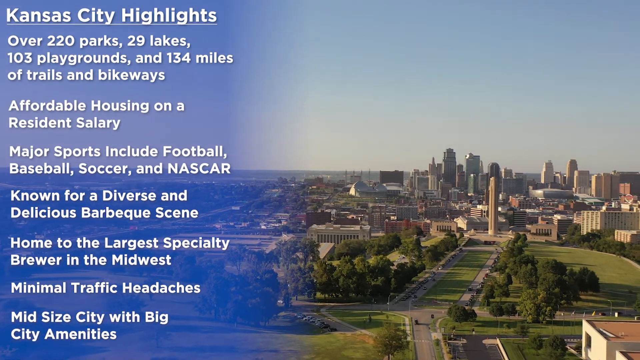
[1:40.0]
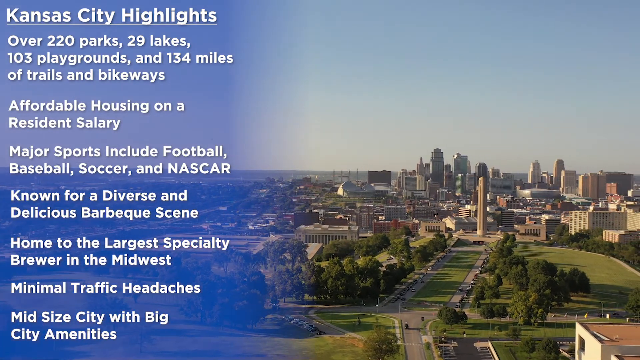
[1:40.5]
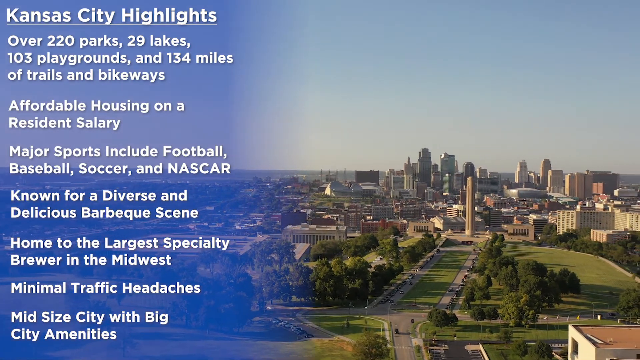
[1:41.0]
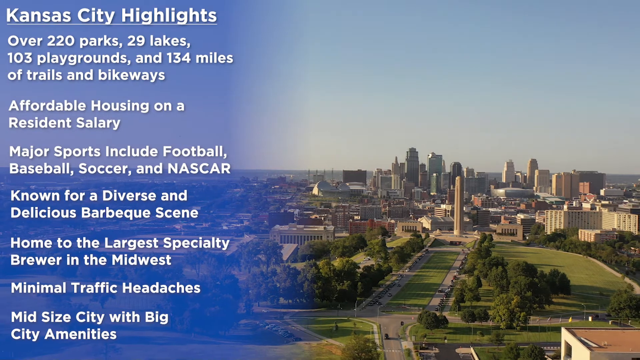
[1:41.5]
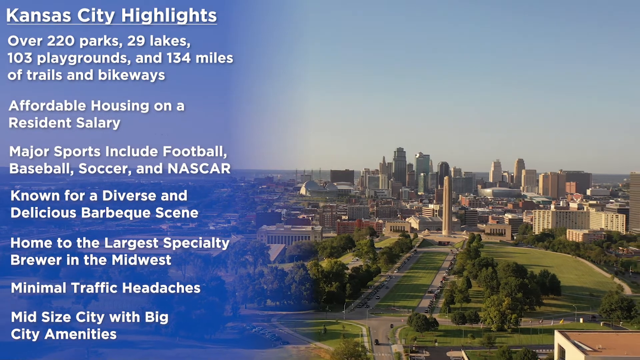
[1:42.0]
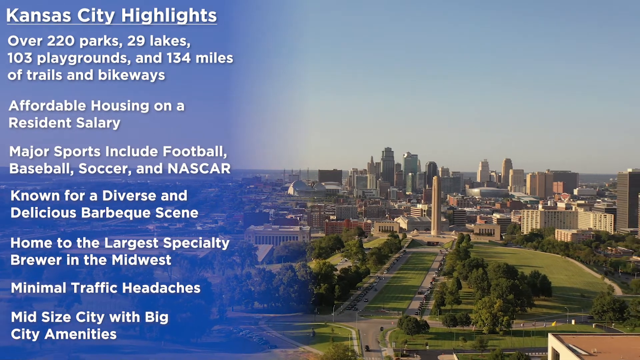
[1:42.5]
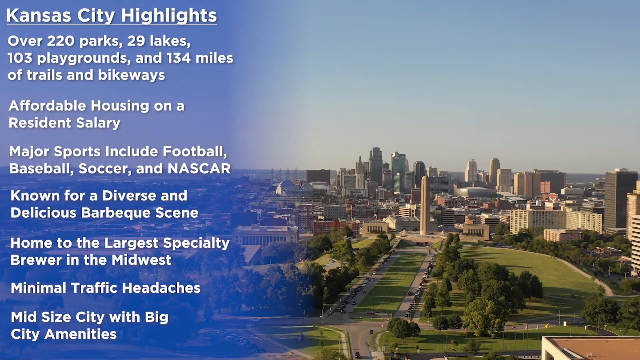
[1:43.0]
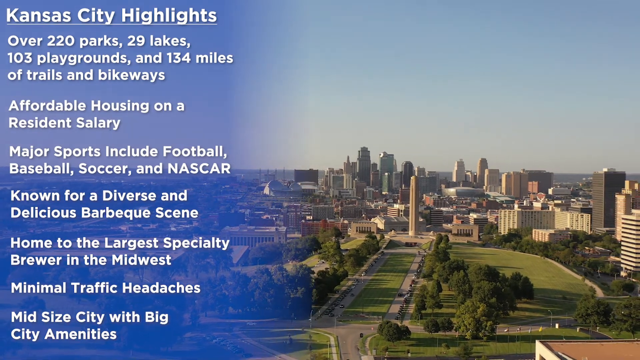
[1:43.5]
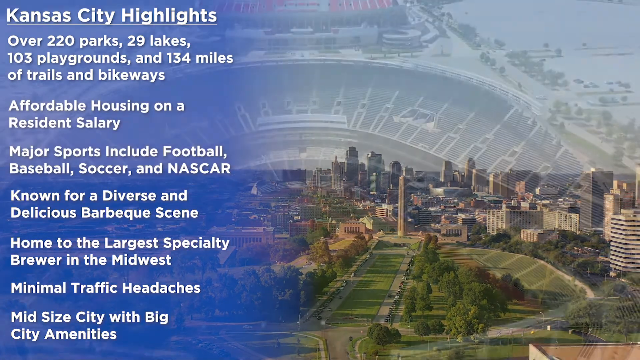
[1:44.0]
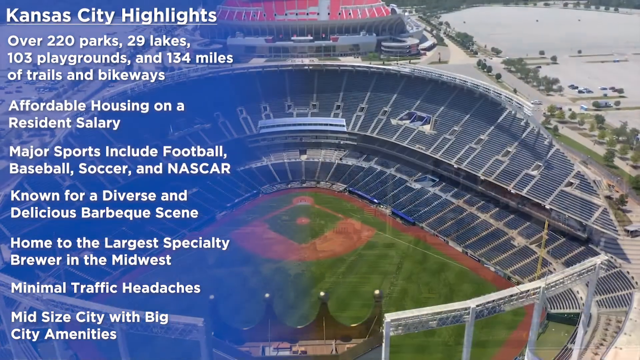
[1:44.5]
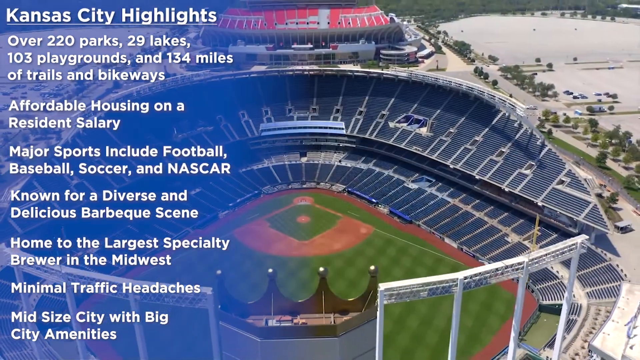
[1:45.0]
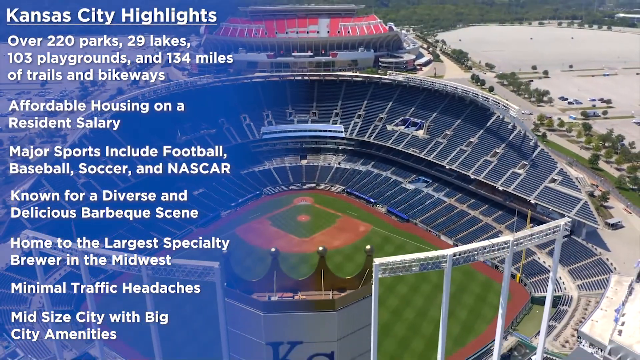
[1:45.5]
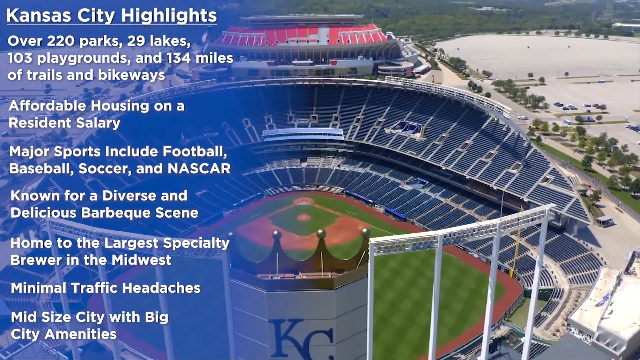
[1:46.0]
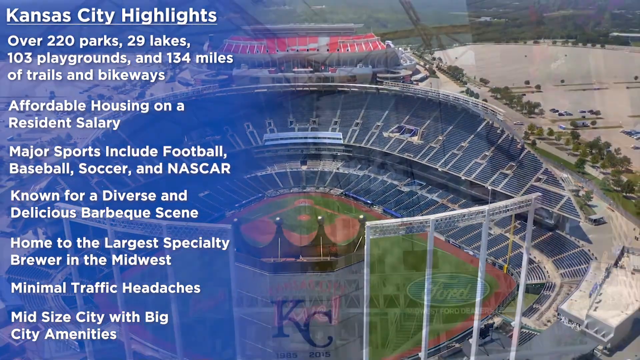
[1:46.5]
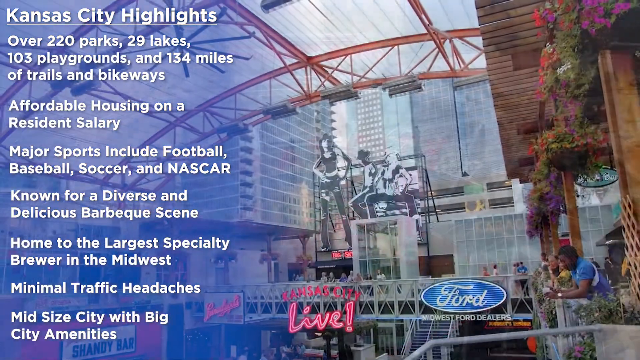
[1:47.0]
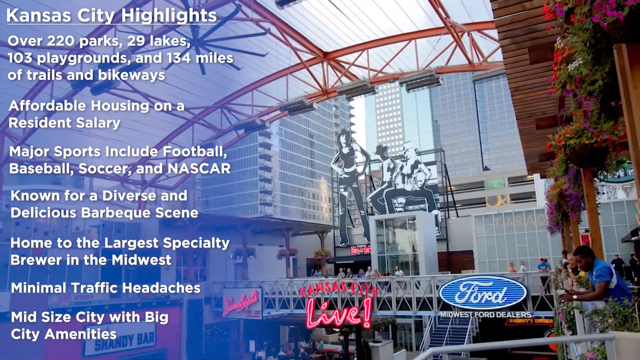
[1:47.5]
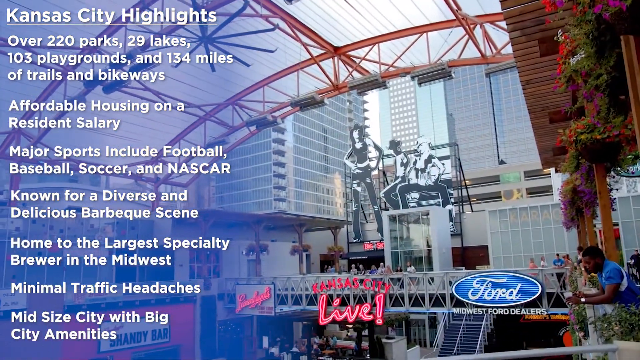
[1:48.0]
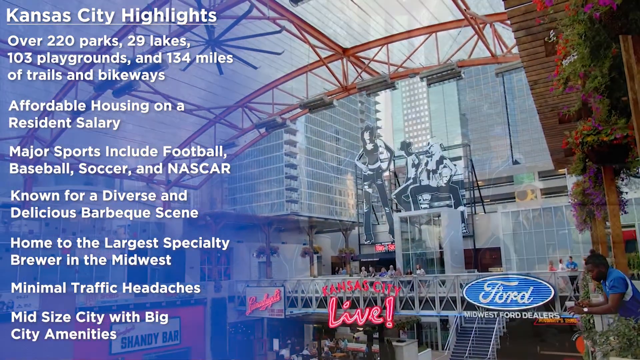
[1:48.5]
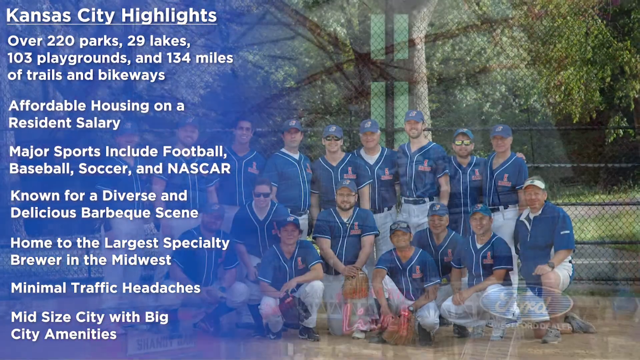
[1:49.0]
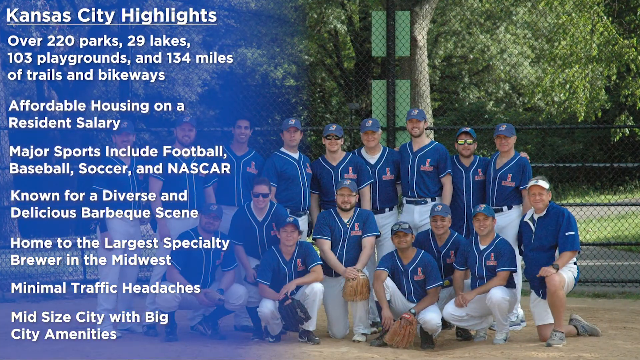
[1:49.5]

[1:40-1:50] On the left side, white bold text reads "Kansas city highlights" over a blue hue background. Beneath it, text includes "over 220 parks, 29 lakes, 103 playgrounds and 134 miles of trails and bikeways", "affordable housing on a resident salary", "major sports include football, baseball, soccer, and NASCAR", "known for our diverse and delicious barbecue scene", "home to the largest specialty brewer in the Midwest", "minimal traffic headaches" and "mid size city with big city amenities". To the right, the city landscape is visible as the camera slowly glides to the right. The scene switches to a kind of aerial view of a large baseball stadium as the shot kind of zooms outwards. The scene then changes to what looks like a concert-like area. Close-up shots follow of what appears to be a baseball team, whose colors appear to be white pants with blue tops; they are mostly male. Nine stand in the background, and eight kneel in front of them.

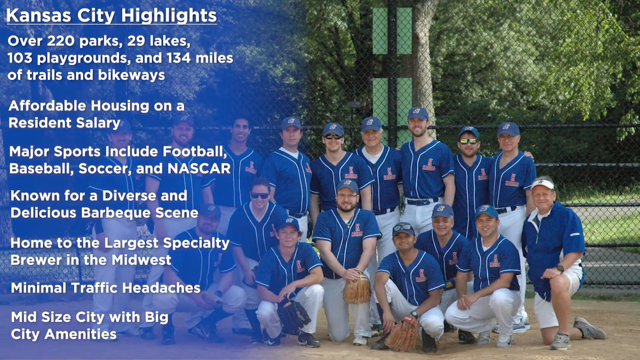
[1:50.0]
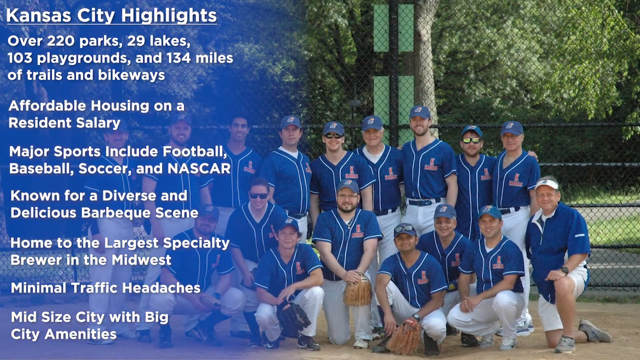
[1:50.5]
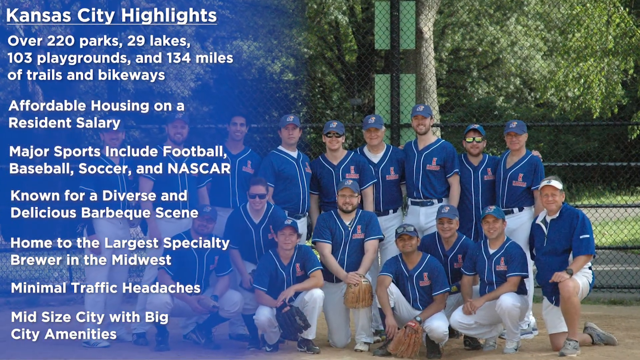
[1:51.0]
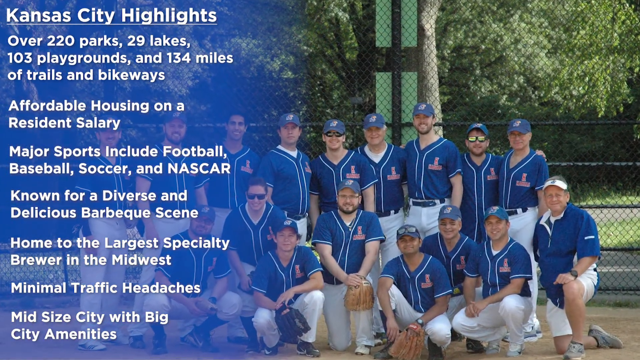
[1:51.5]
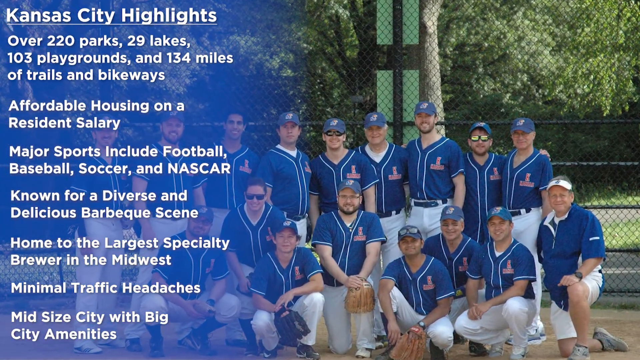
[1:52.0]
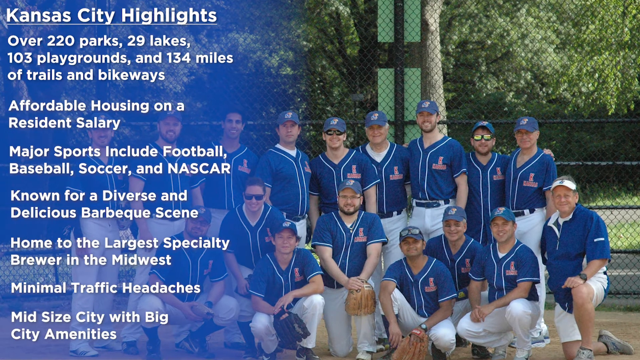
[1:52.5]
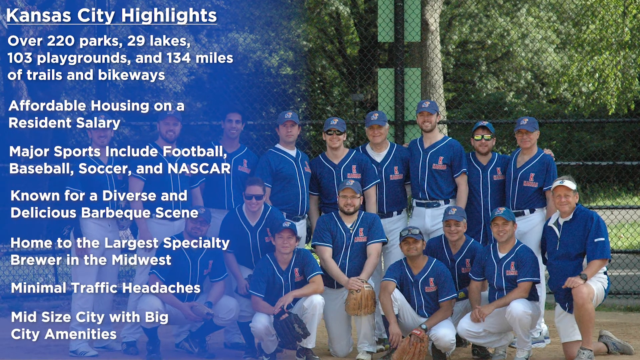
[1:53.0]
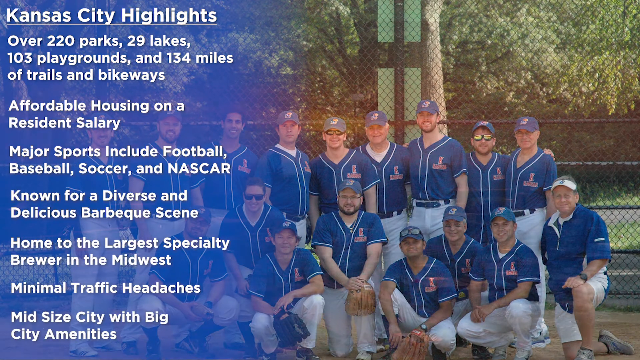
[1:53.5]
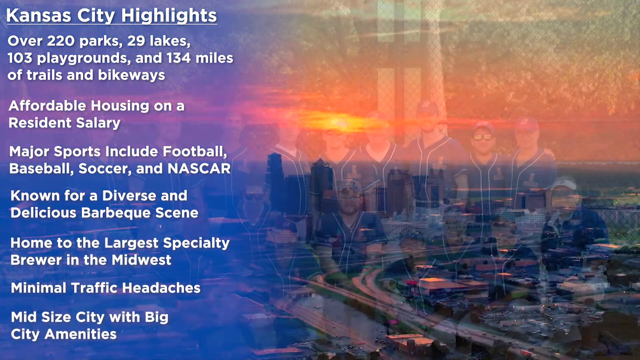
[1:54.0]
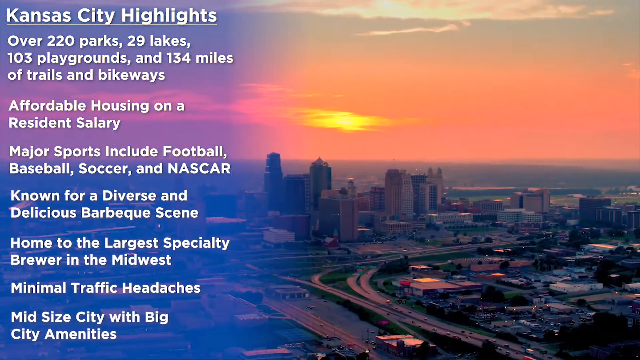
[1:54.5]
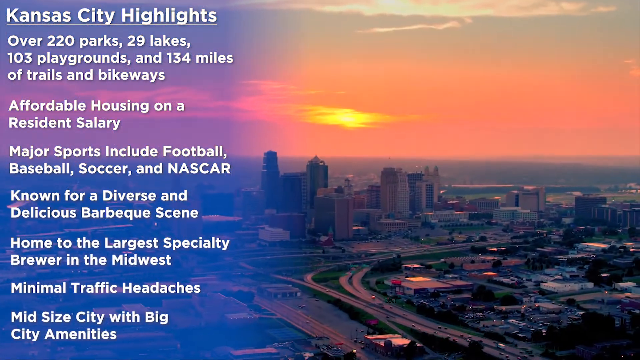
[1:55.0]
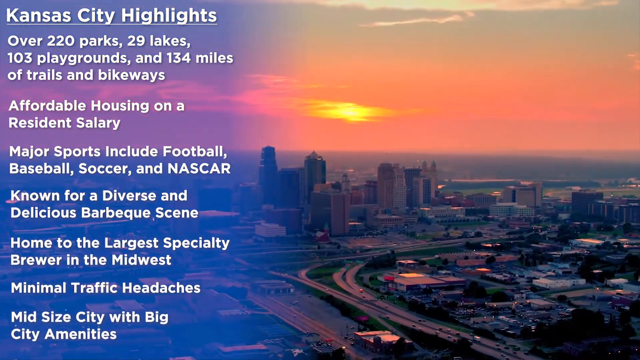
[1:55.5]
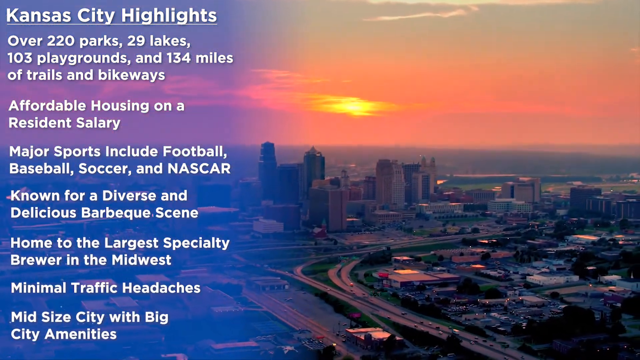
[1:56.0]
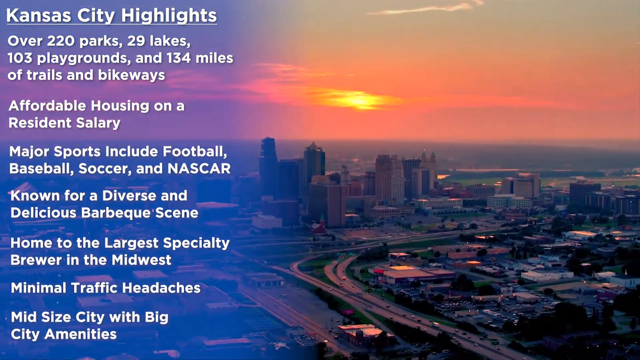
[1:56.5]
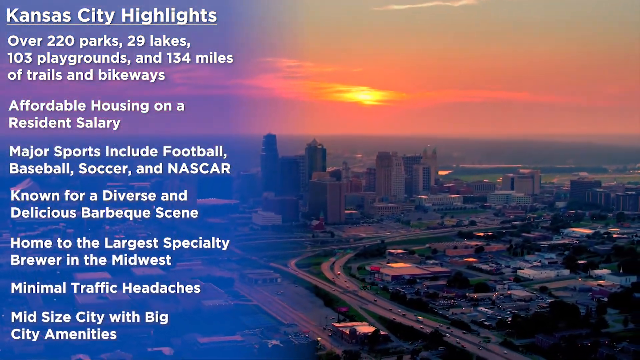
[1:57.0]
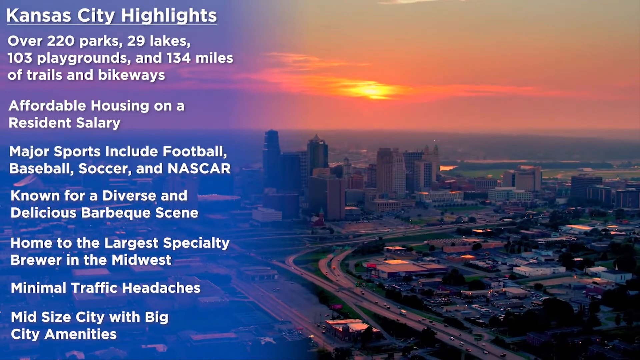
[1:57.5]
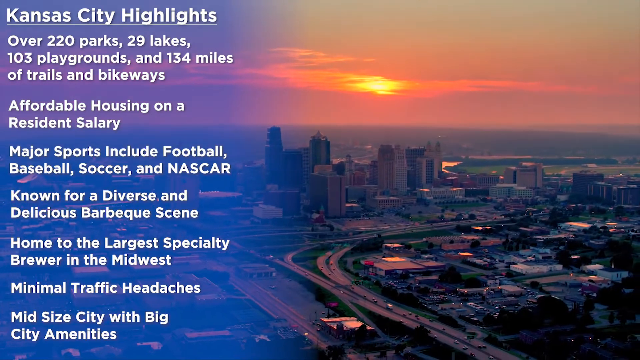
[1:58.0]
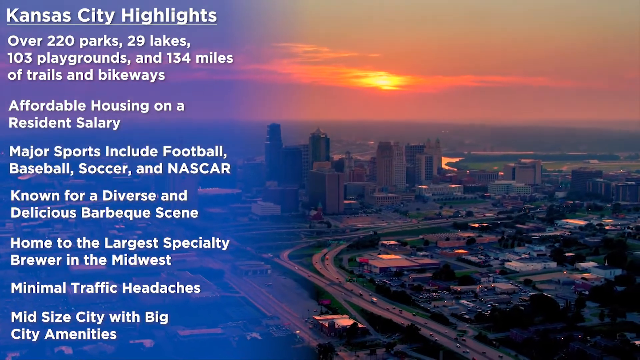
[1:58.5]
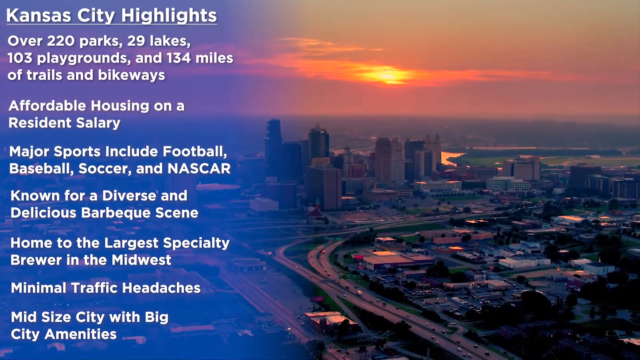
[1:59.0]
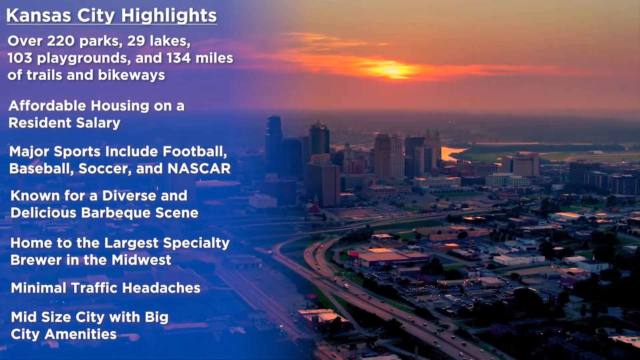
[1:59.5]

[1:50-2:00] On the left, white bold text reads "Kansas City Highlights", listing highlights such as affordable housing, major sports including football, baseball, soccer and NASCAR, a diverse and delicious barbecue scene, and minimal traffic headaches. In the background on the right is a baseball team. Nine people stand in the back, most with their hands down at their sides; the man second from the right has his arms around the men to his left and right, with his hand appearing on the back of the man to his left. They all appear to be white, and all are male. In front of them, what appear to be eight men of the same team kneel, and one at the far bottom right appears to be the coach. The camera slowly zooms in on this photo of the men. The scene changes to an aerial shot of the city that looks like evening: the top half shows a very orange sky with a slightly yellowish hue in the middle, potentially the sun. The camera slowly zooms to the right over the large city, showing a number of buildings and vehicles driving on the roads.